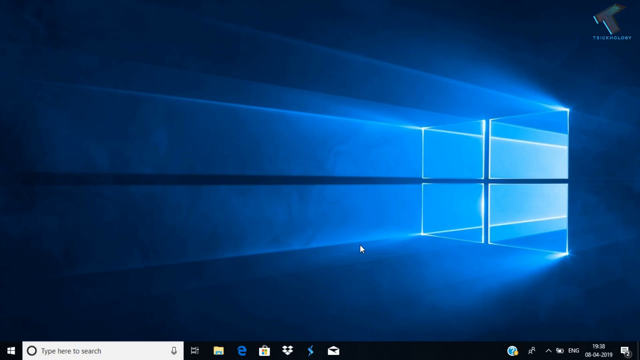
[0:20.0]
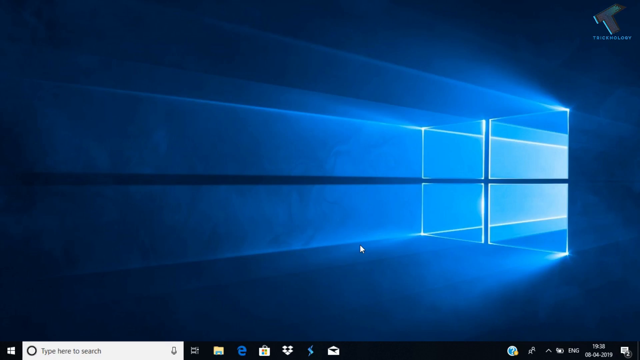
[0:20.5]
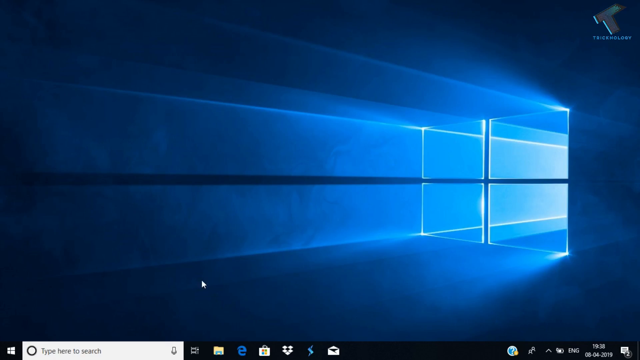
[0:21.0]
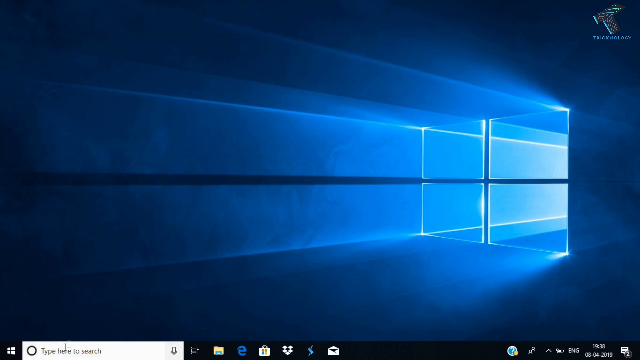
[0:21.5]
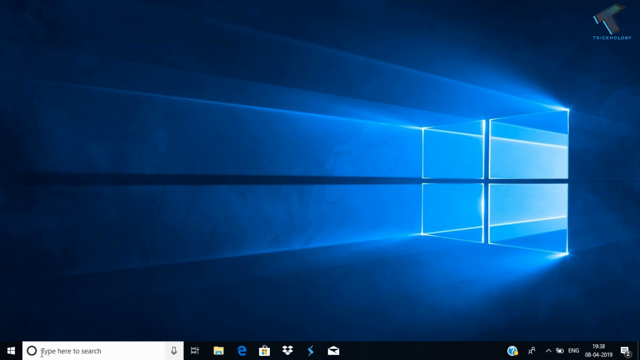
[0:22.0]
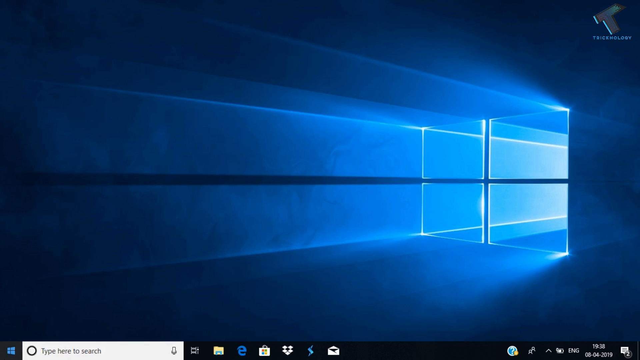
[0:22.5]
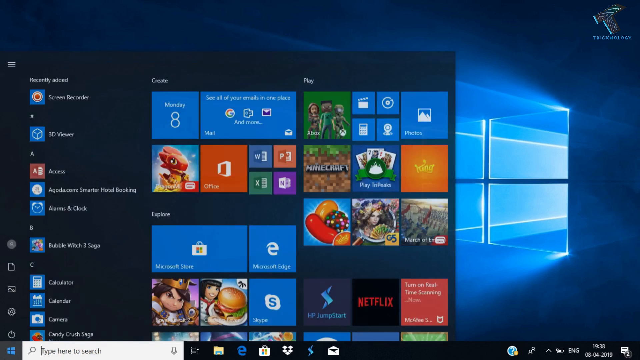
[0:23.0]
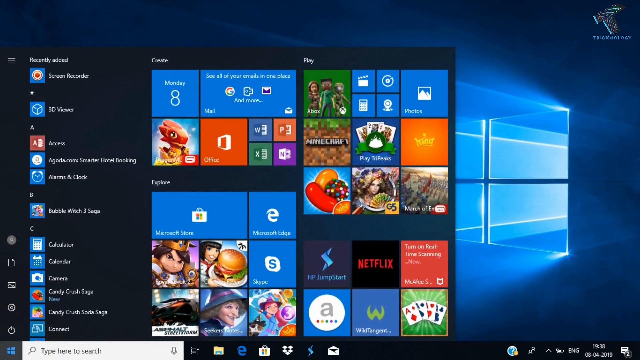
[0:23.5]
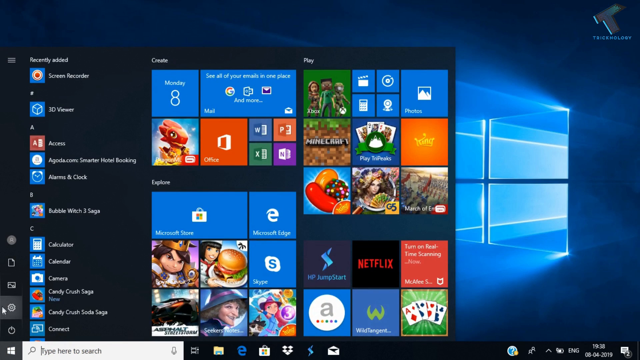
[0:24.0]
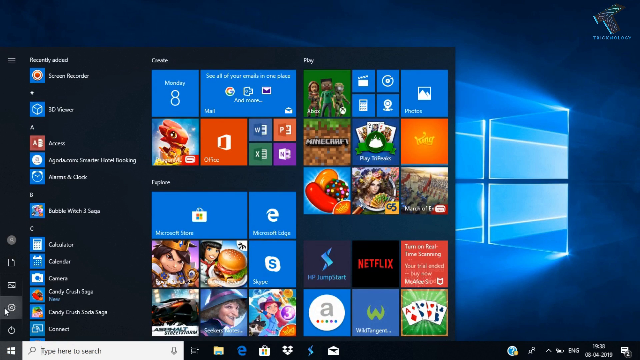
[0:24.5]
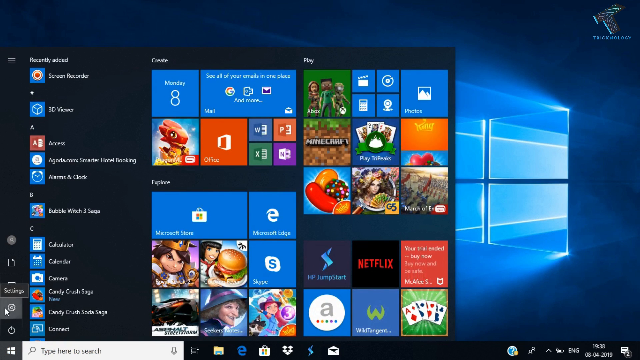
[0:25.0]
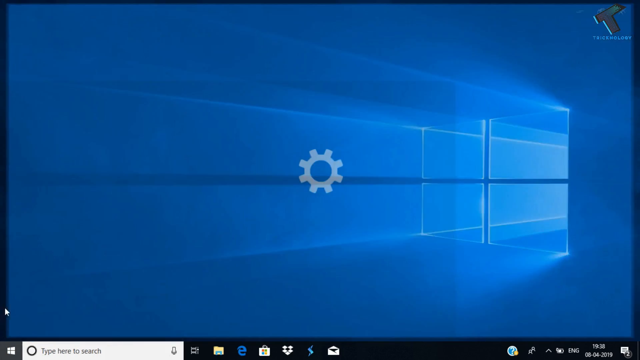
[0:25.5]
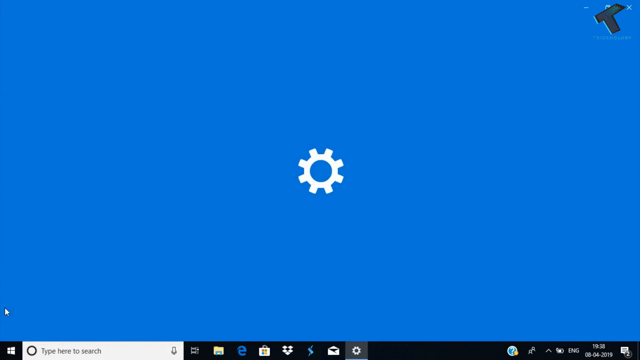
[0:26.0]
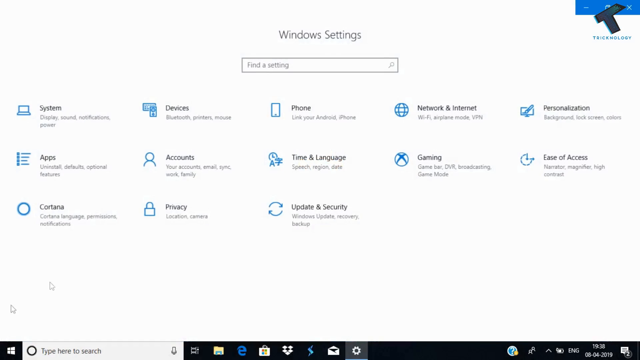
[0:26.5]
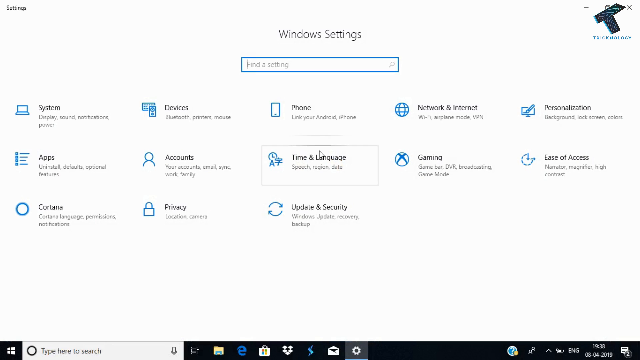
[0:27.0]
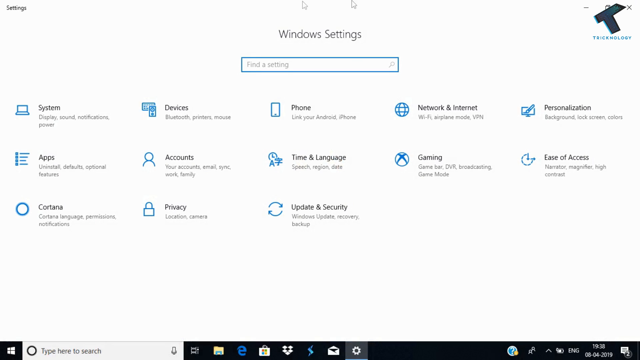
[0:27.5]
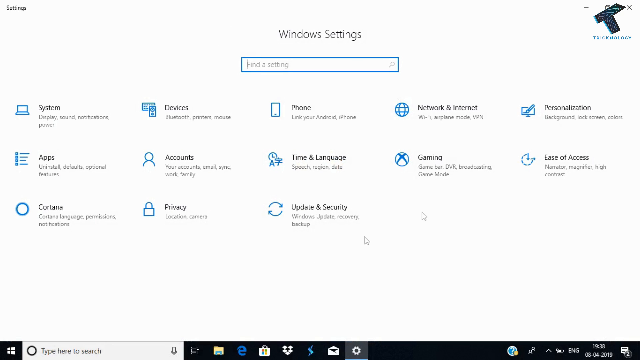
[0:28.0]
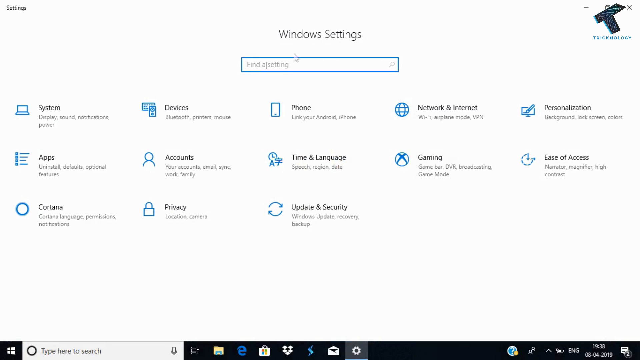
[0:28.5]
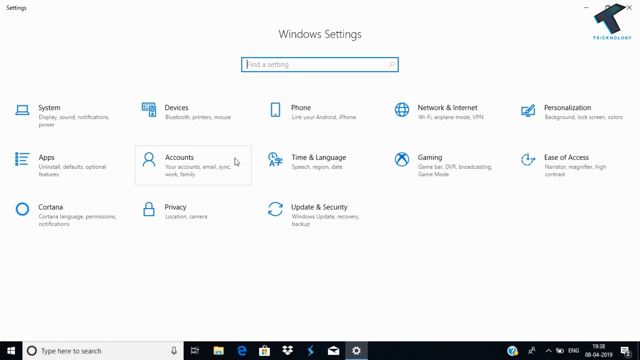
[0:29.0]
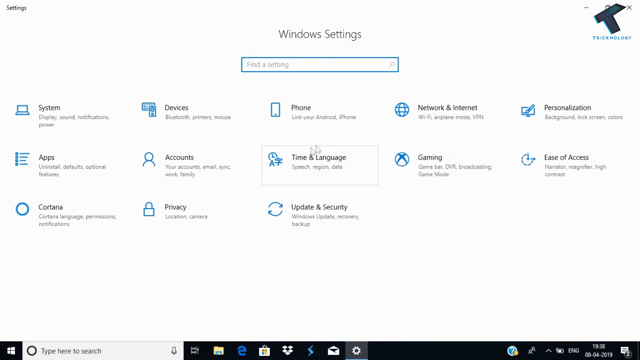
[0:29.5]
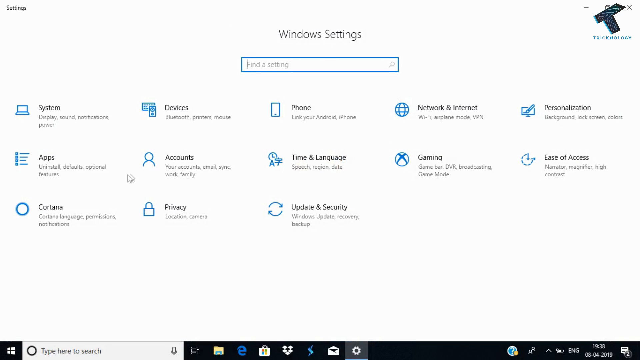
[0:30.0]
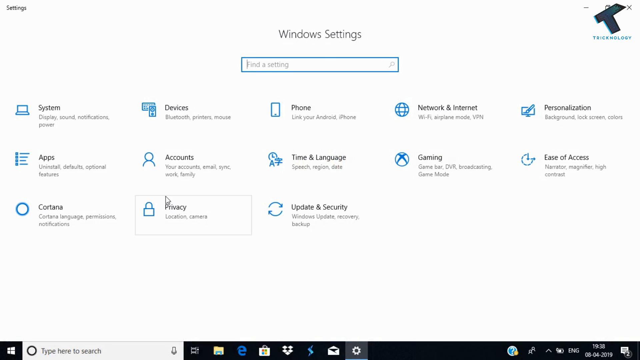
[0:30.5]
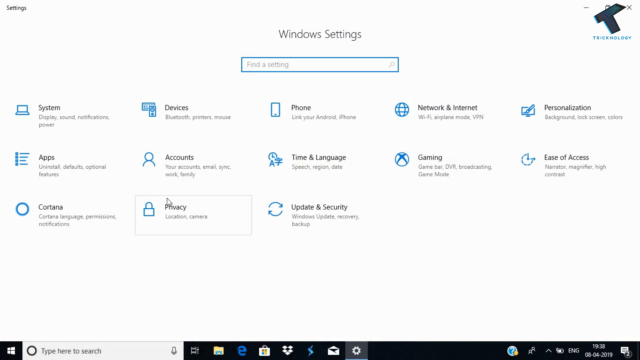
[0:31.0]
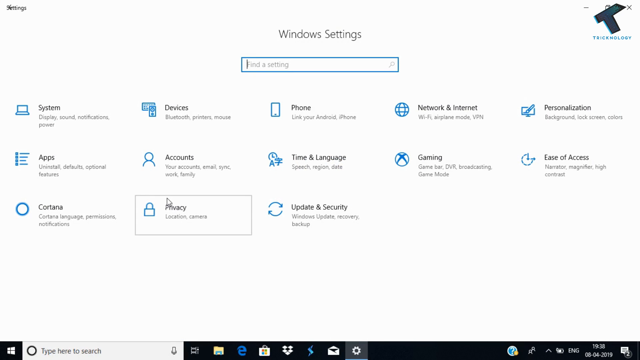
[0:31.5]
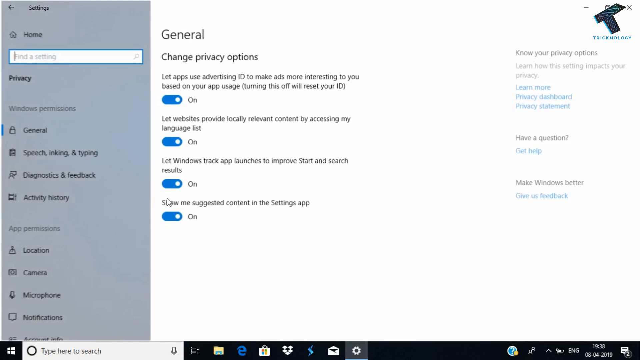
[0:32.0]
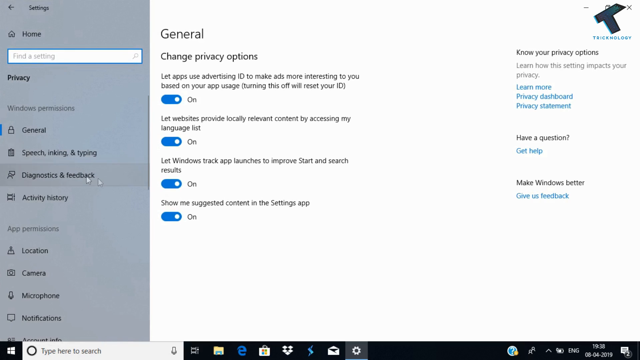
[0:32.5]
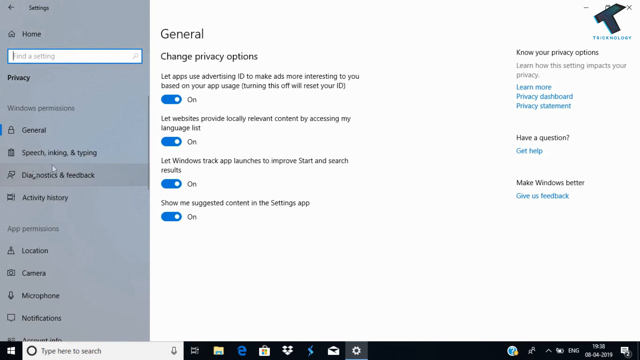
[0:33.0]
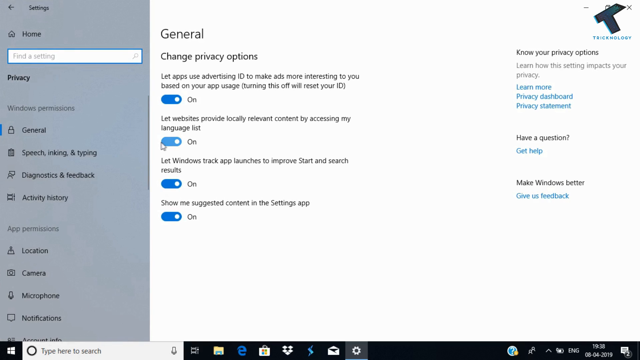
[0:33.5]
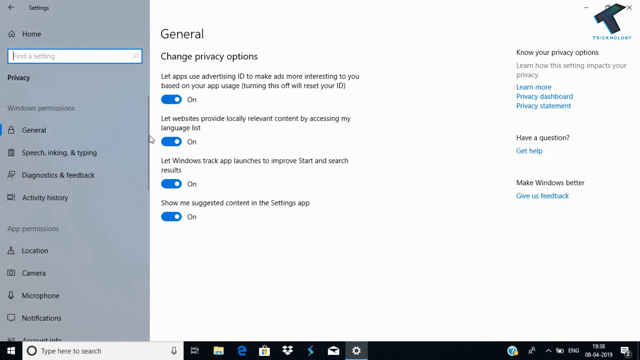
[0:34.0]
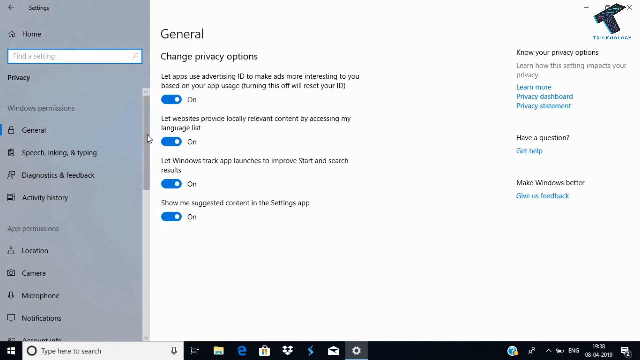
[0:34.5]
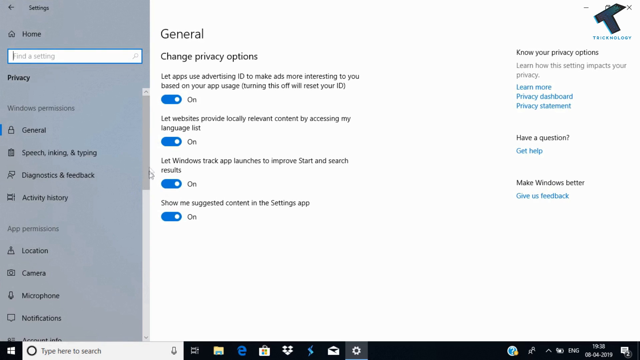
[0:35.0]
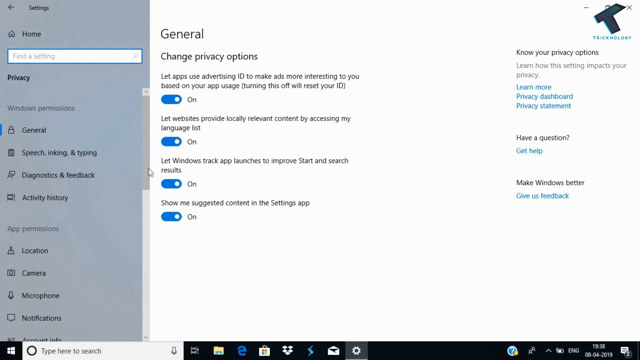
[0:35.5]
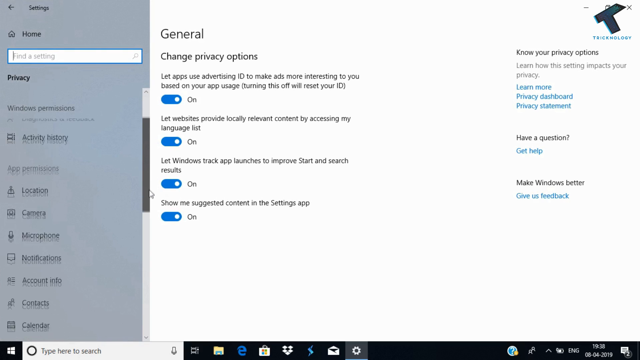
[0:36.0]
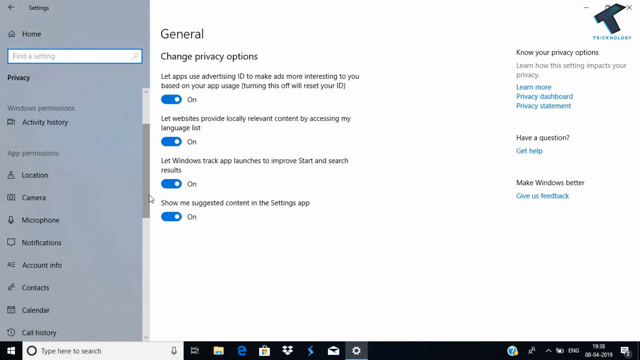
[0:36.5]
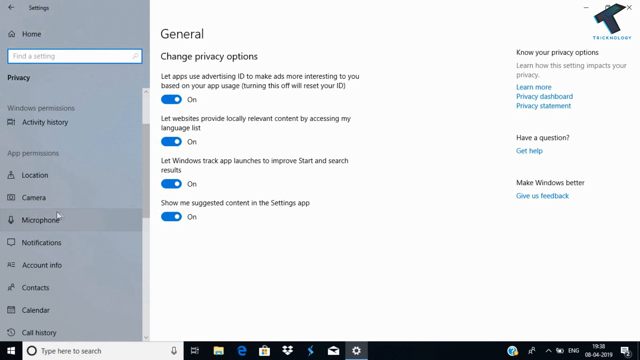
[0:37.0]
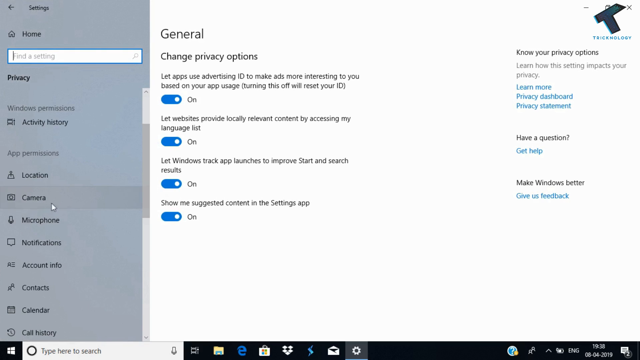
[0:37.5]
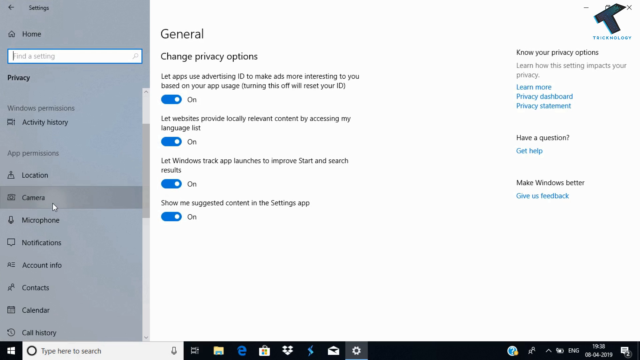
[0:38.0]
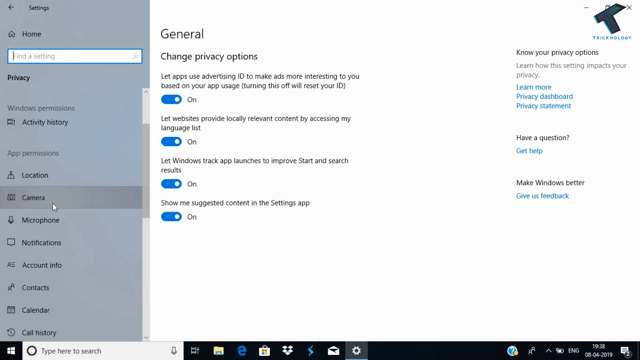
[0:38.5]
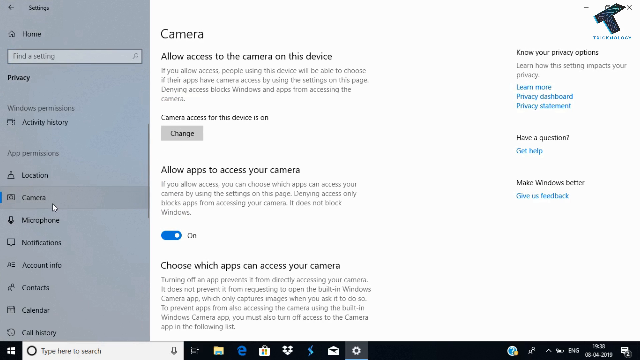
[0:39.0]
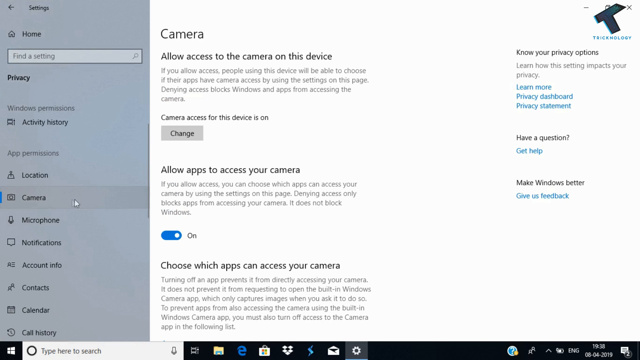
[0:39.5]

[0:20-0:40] A sort of Microsoft-style logo emits neon blue light across the whole screen. A taskbar suddenly pops up on the left side of the screen, showing different icons for the applications on the laptop. The video transitions to a blue screen with a settings icon, which looks like a gear, right in the middle. Next comes a page showing the Windows settings, with all the Windows settings icons displayed. The cursor moves and hovers around the entire screen until it reaches the privacy settings and stops there. It taps the privacy settings icon and the privacy section appears. The cursor then slides the bar down and taps the icon for the camera setting.